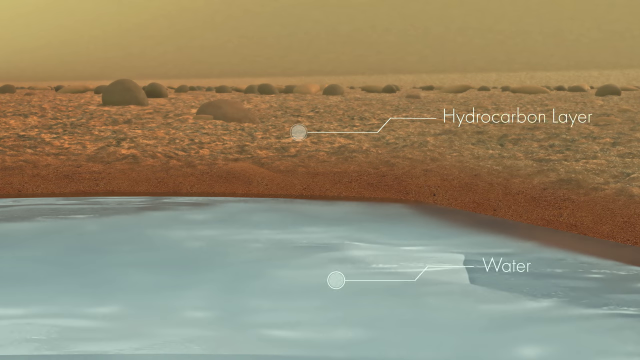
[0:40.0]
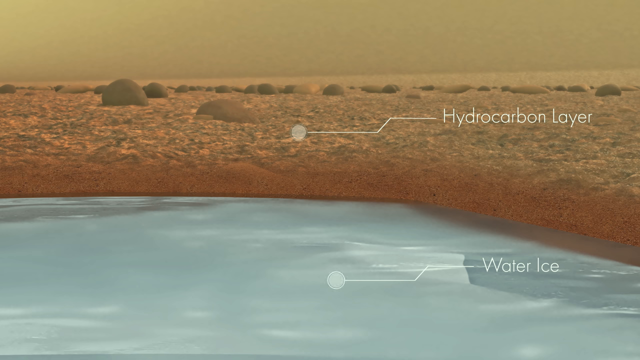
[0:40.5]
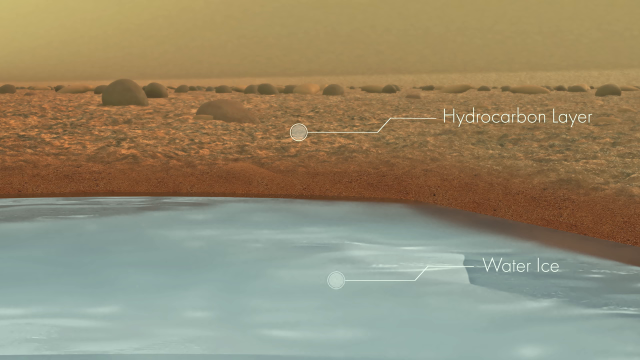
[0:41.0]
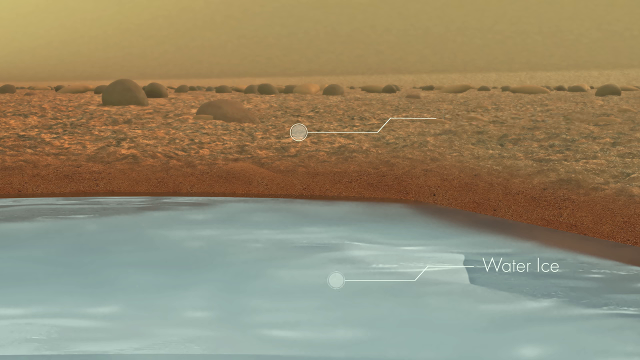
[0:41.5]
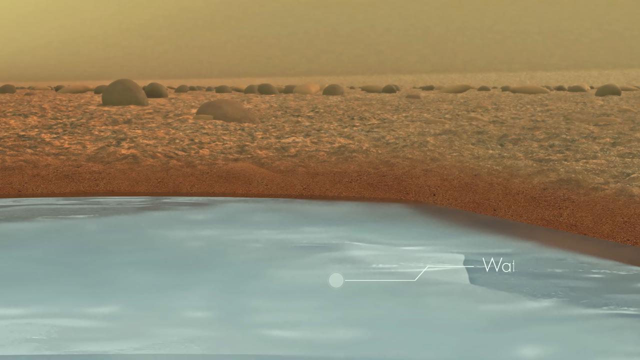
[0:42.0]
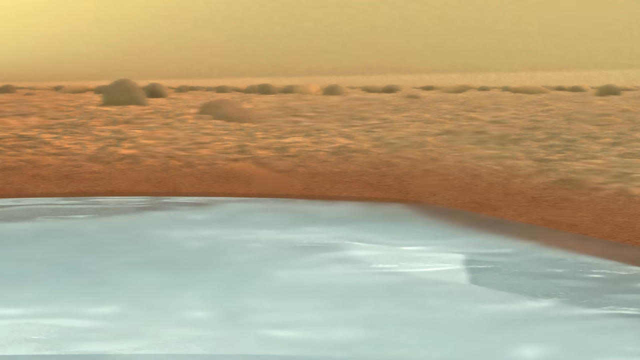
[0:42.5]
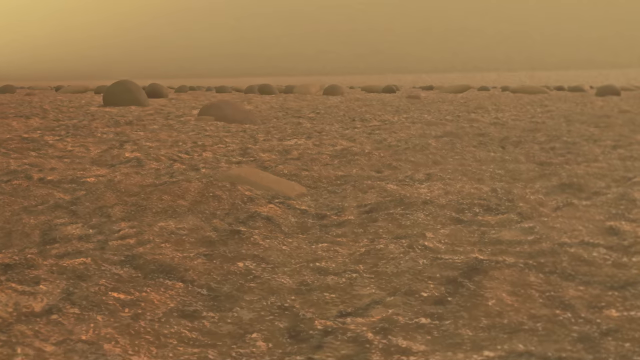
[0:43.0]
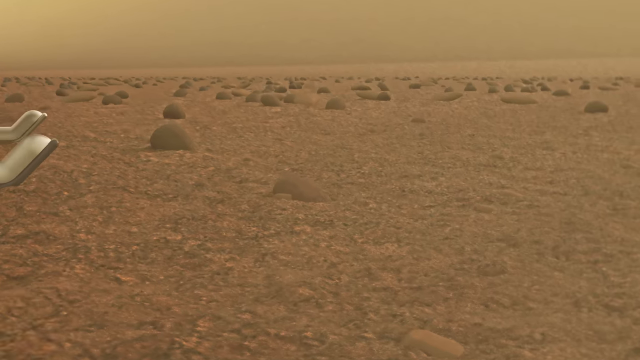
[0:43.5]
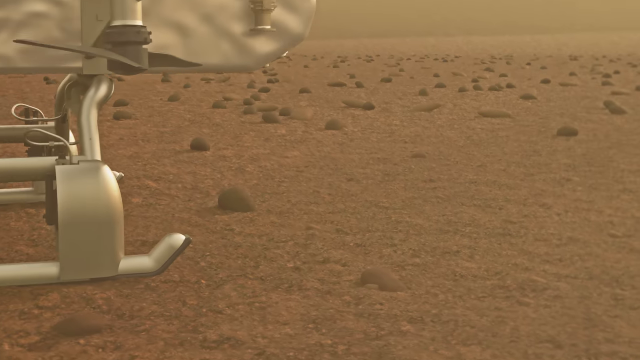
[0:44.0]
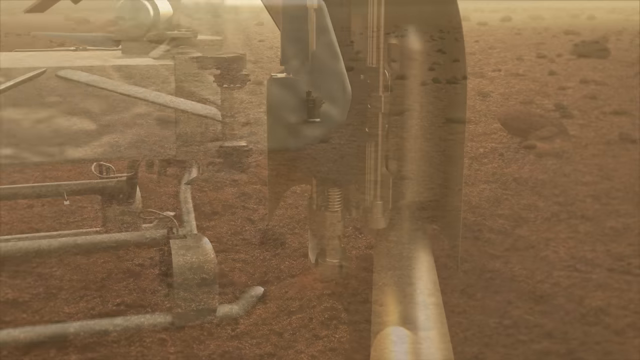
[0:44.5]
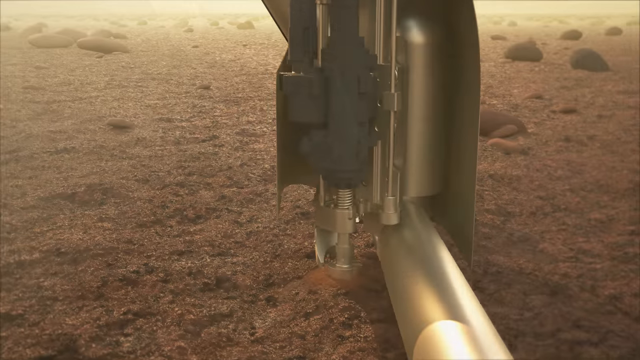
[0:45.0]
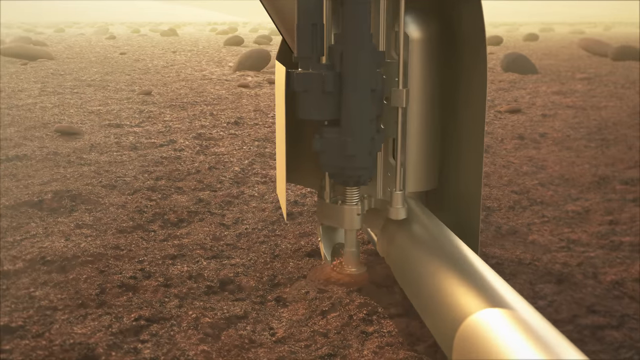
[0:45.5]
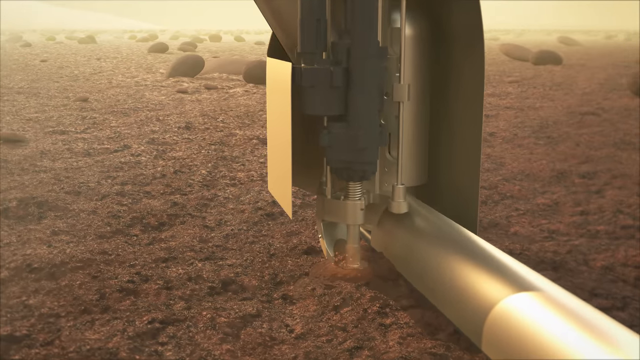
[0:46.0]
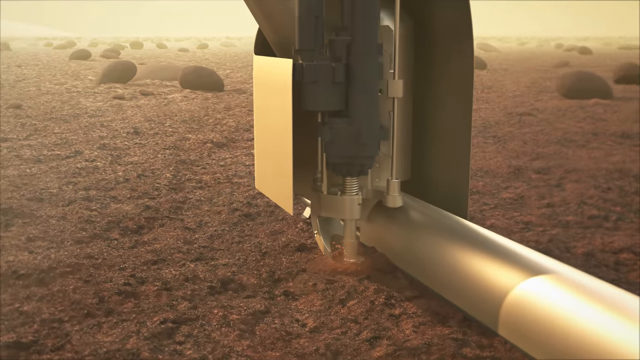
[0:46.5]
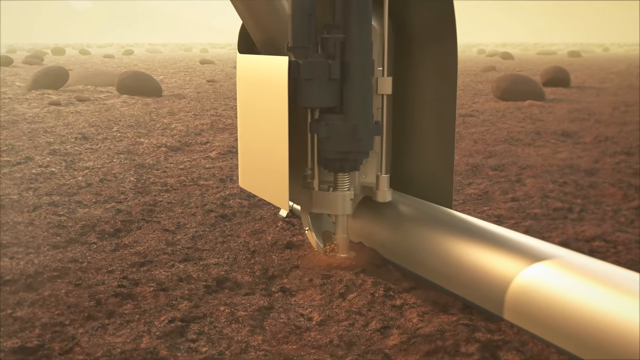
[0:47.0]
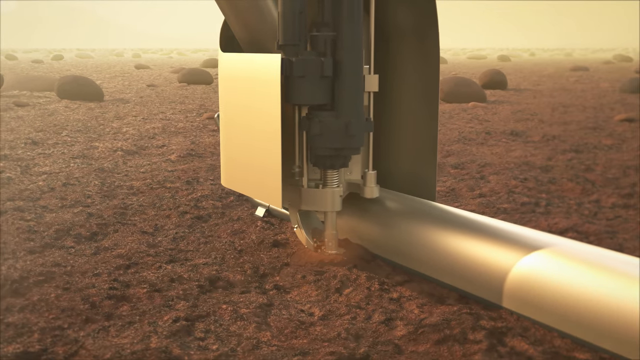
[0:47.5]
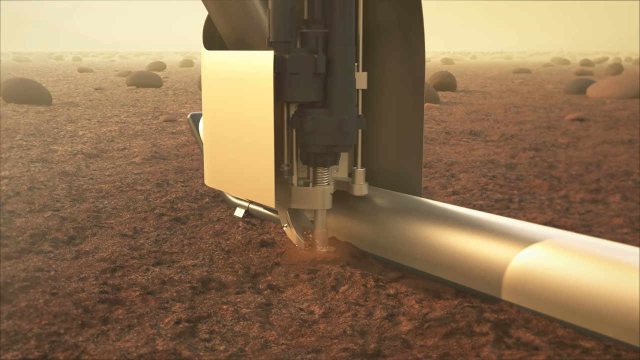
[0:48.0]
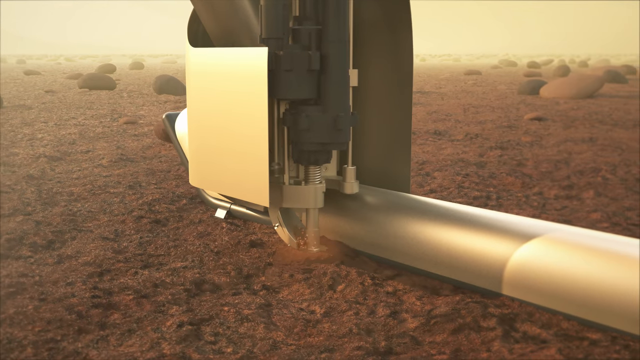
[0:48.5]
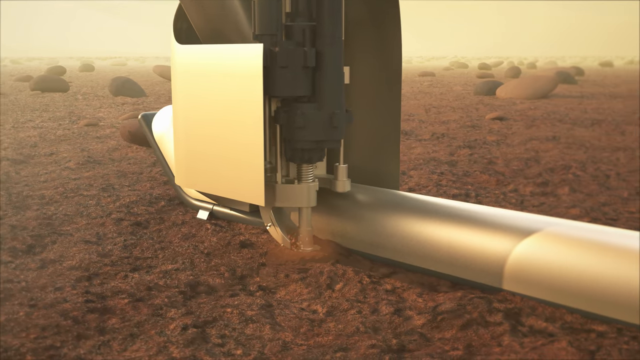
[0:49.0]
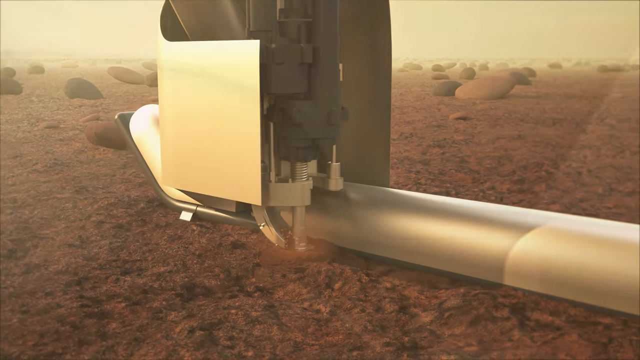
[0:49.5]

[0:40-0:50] A ground-level view of the planet shows dirt and rocks, with a little water in the bottom portion of the screen. White text reads "water ice", and white text in the ground area reads "hydrocarbon layer". The text disappears, there is a quick flash, and the view moves back to the left and up to the drone. It begins to look as if the view will go above the drone, but the image changes back to ground level, apparently zoomed in on one of the drone's legs. The angle moves slightly to the left.